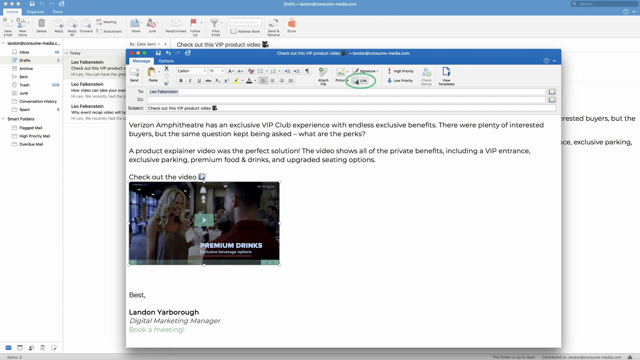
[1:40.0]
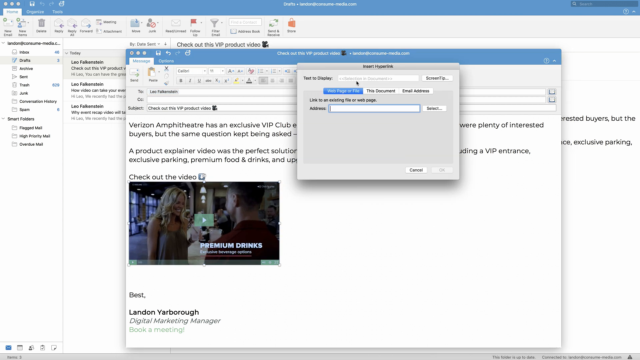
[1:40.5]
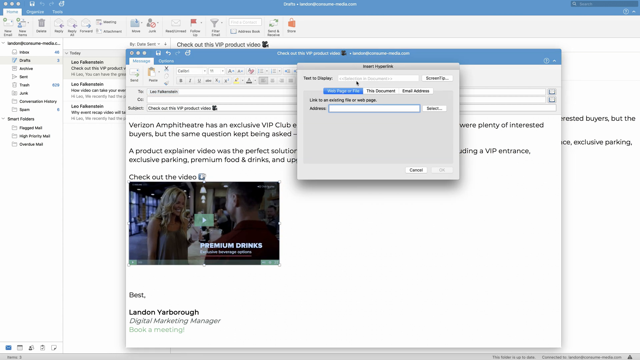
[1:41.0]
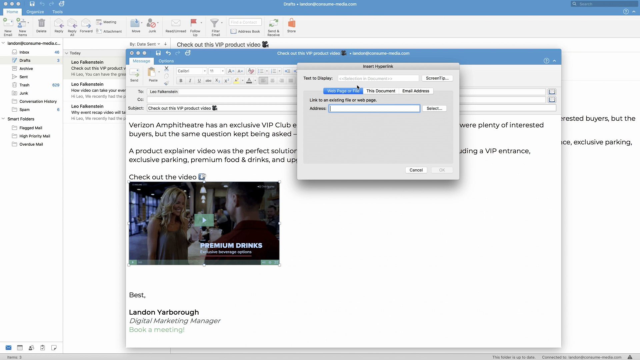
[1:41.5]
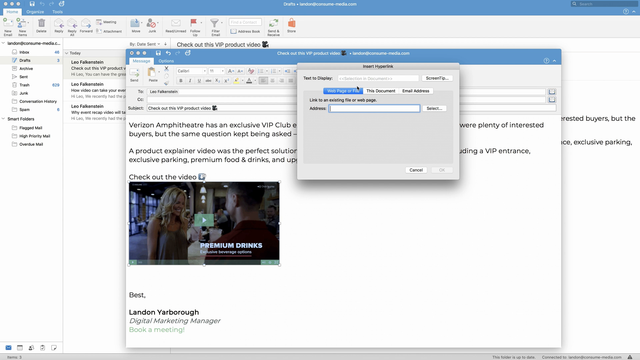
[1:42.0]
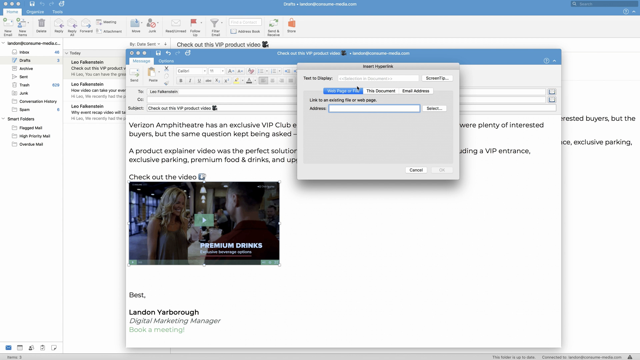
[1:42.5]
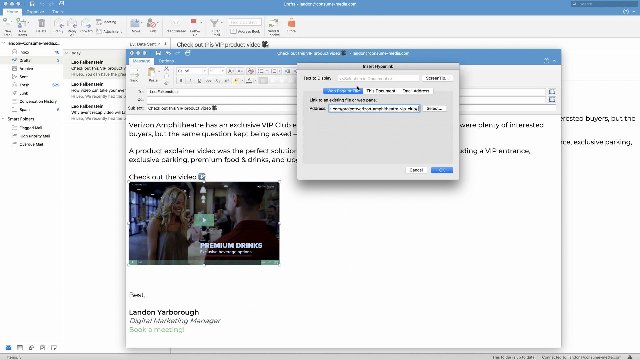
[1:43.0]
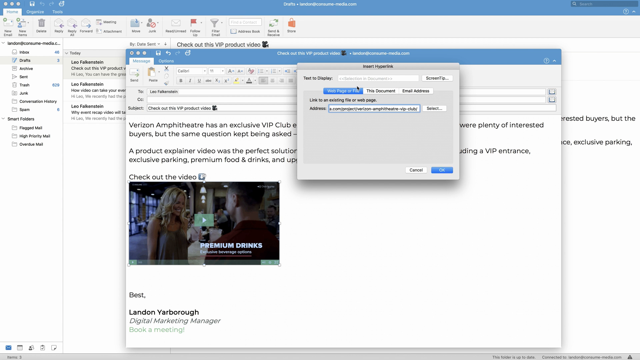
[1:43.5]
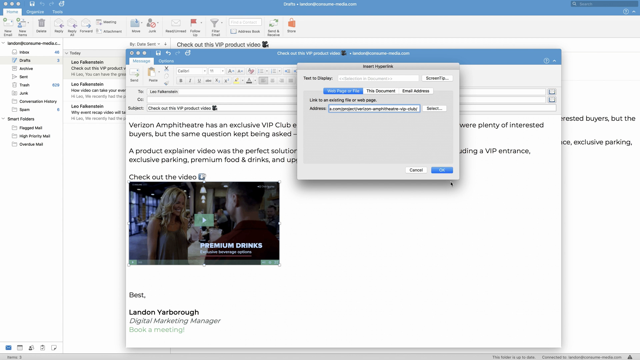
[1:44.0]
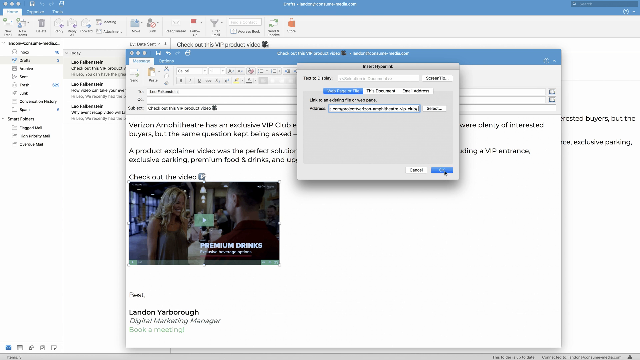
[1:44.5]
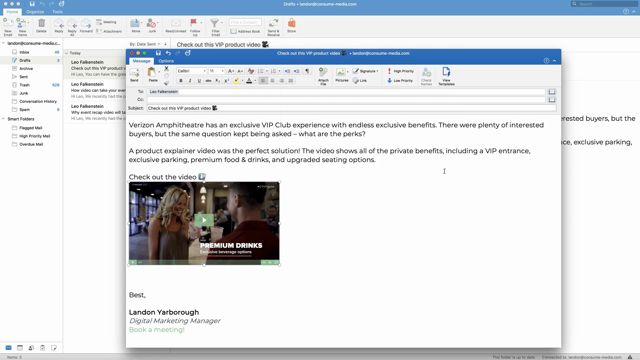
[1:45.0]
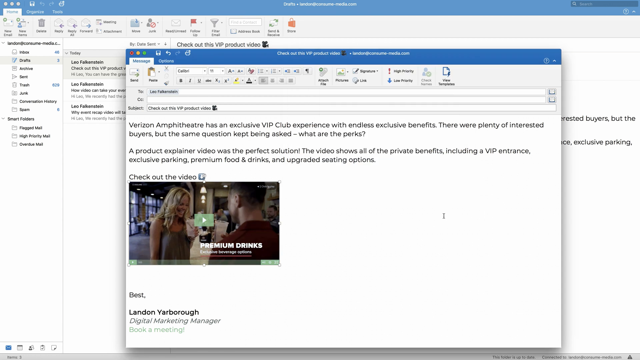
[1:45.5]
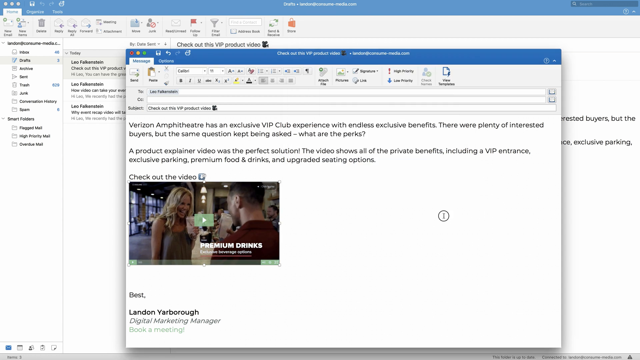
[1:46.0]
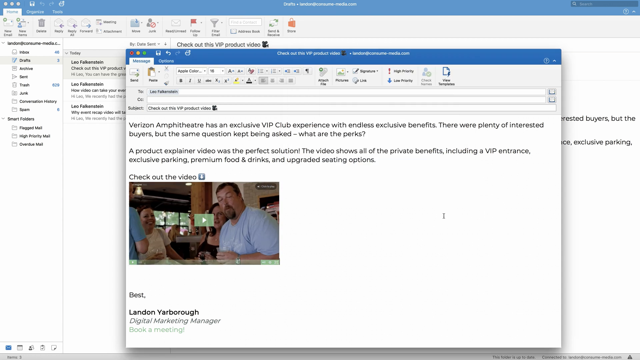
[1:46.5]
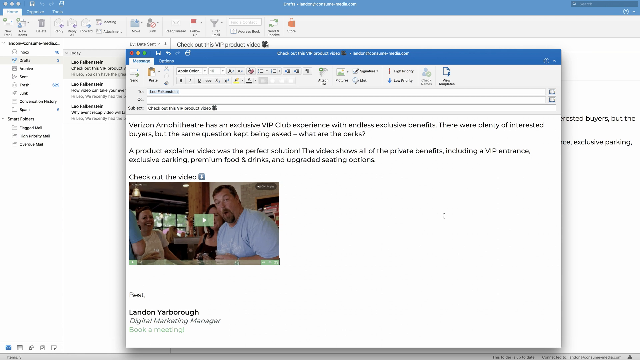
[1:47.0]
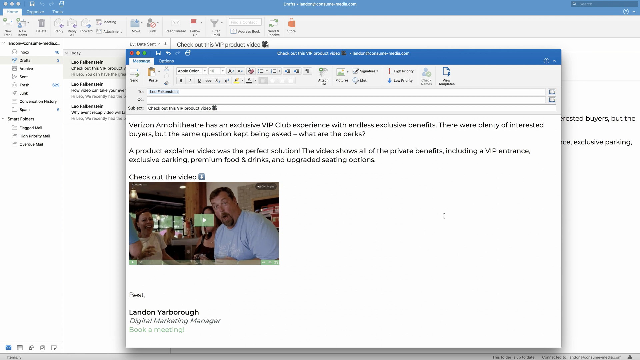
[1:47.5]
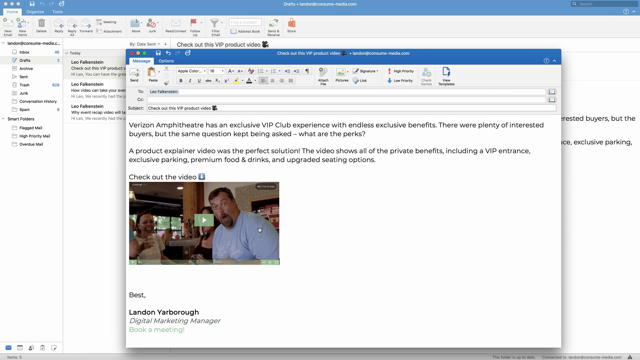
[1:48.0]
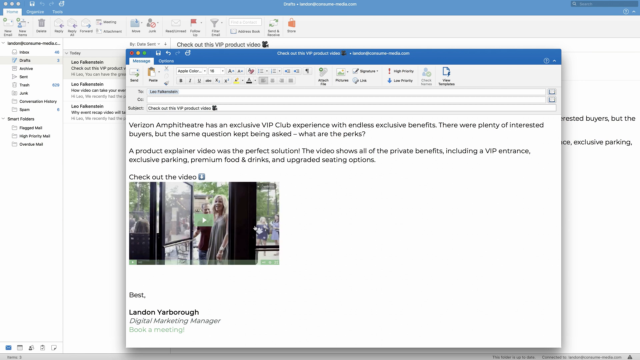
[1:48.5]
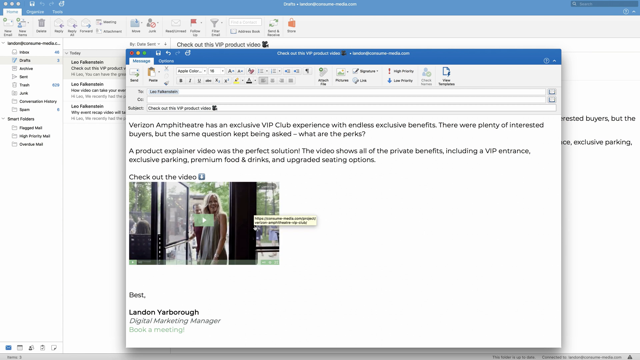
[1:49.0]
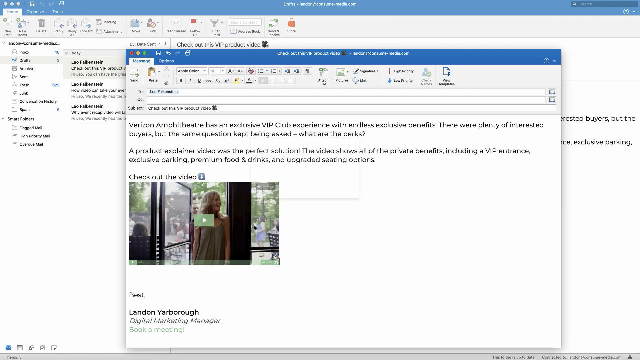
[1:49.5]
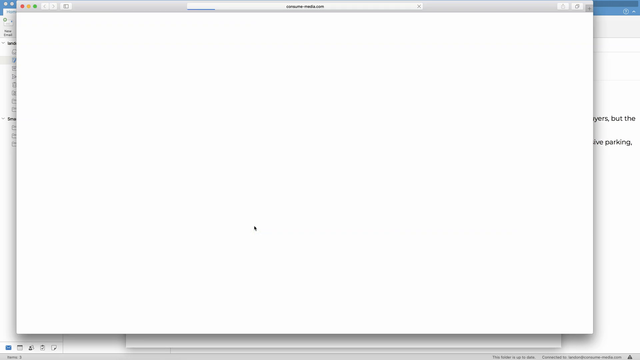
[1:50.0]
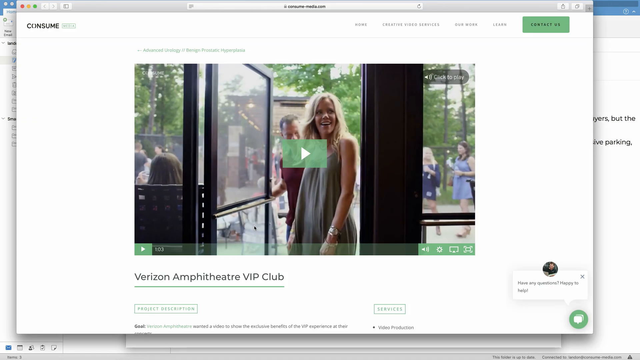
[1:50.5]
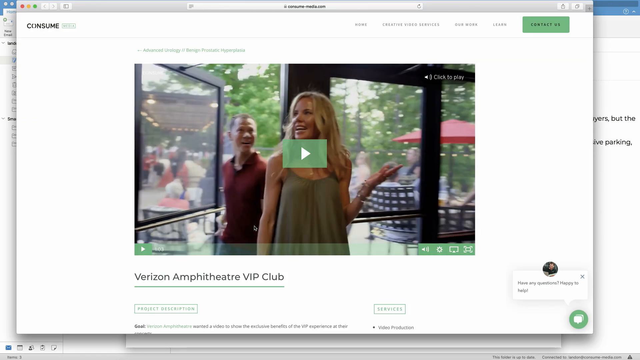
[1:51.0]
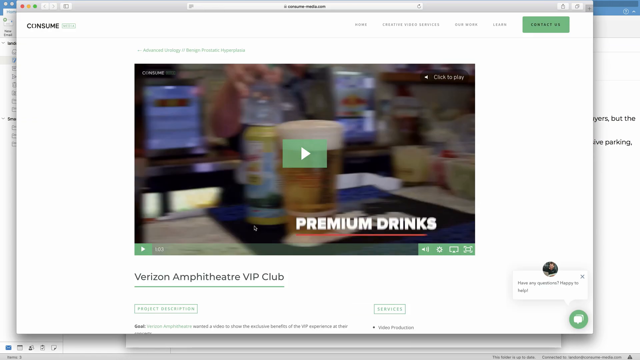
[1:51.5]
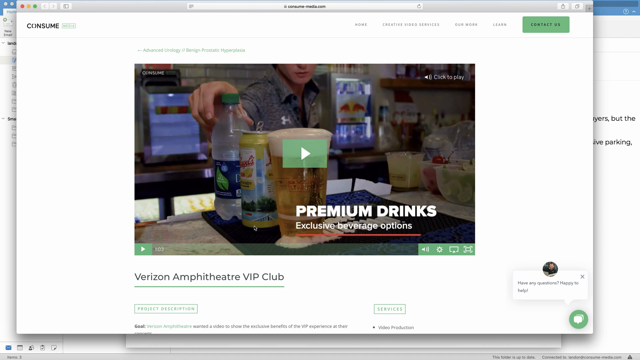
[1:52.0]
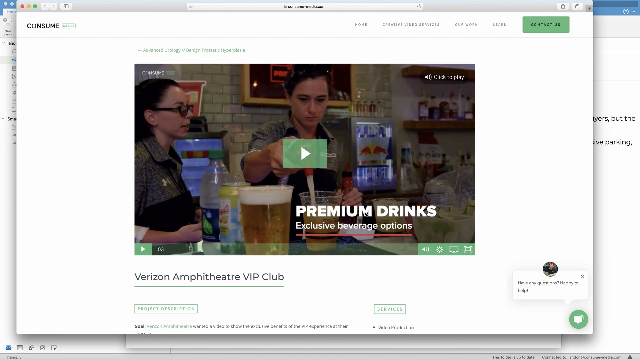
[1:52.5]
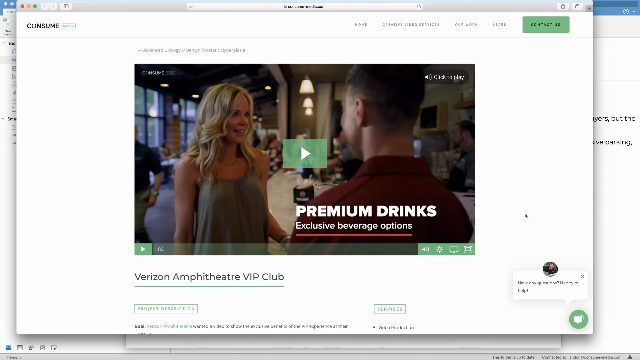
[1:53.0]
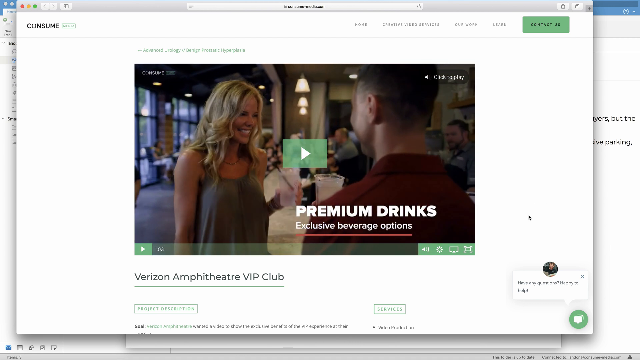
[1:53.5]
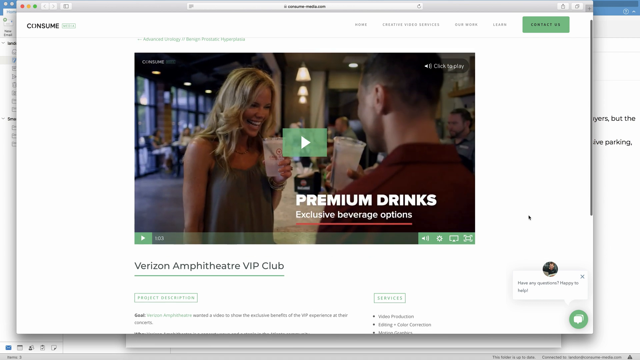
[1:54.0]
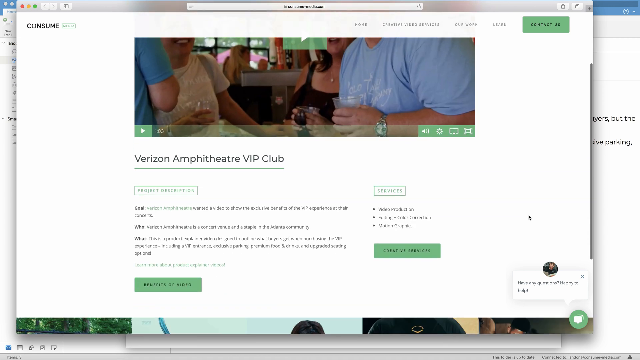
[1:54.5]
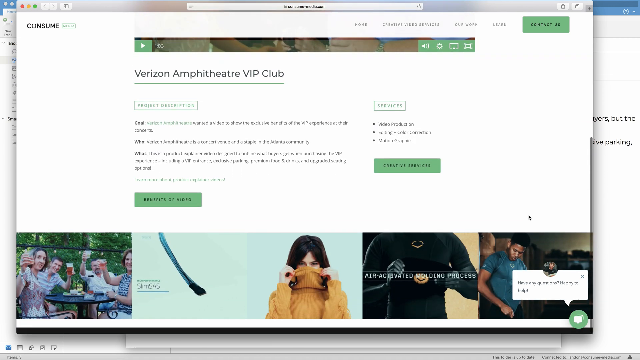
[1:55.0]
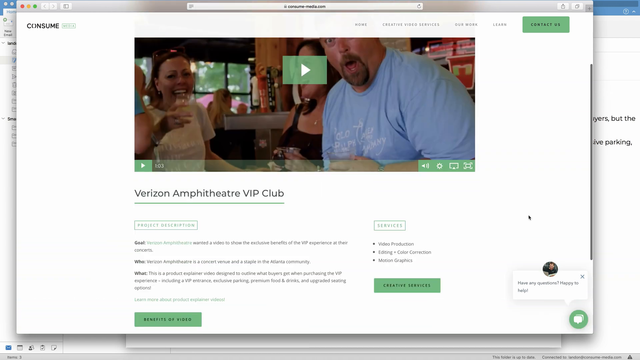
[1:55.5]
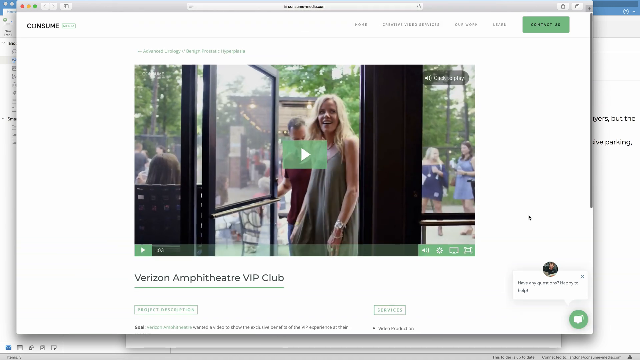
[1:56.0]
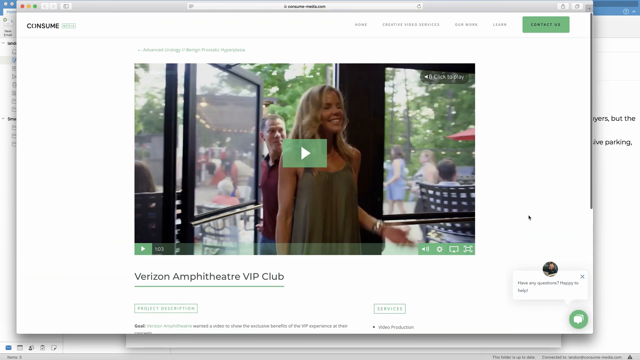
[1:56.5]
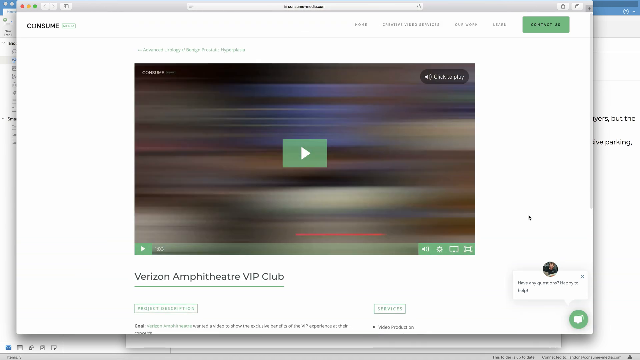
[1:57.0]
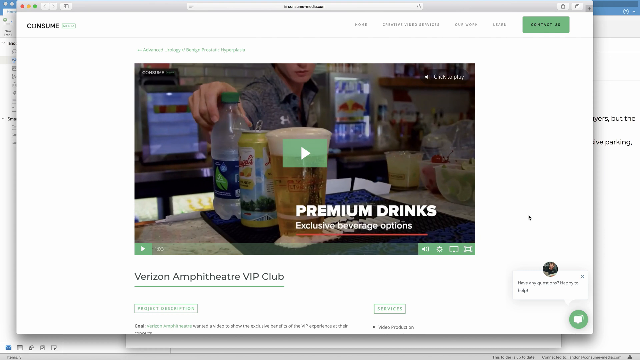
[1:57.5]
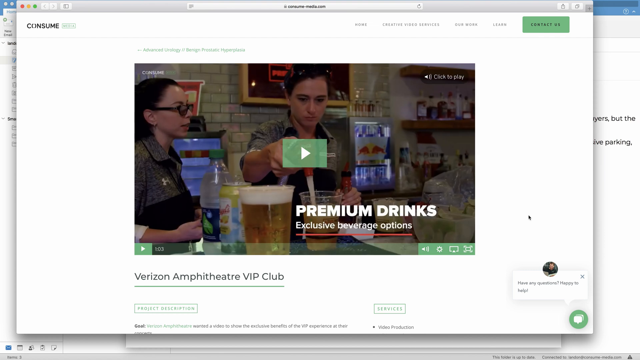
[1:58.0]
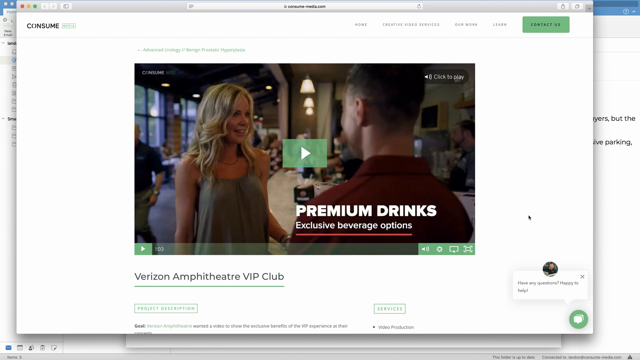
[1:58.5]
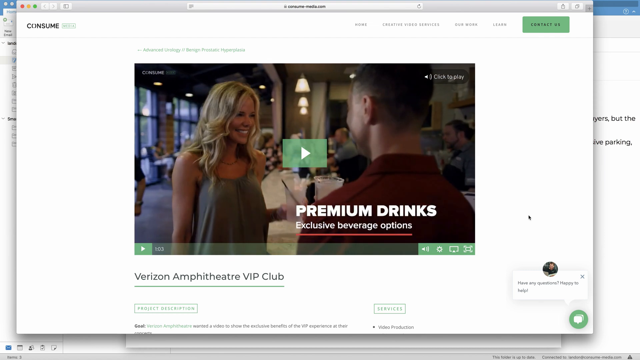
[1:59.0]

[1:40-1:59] Leo is still on the email sent to him by Landon. On his laptop he has opened the video, which is shown in the background of the email. He goes to links and clicks on it, and an Insert Hyperlink box shows up. He puts the video link in the address bar and clicks OK, and the video starts to play. A blonde woman in a forest green tank top enters a bar and talks to a man in a dark red t-shirt. Text on the video reads "premium drinks exclusive beverage options". Other men and women in the bar are drinking and having fun; some drink beer, some malt, and some water, chatting and laughing with each other.